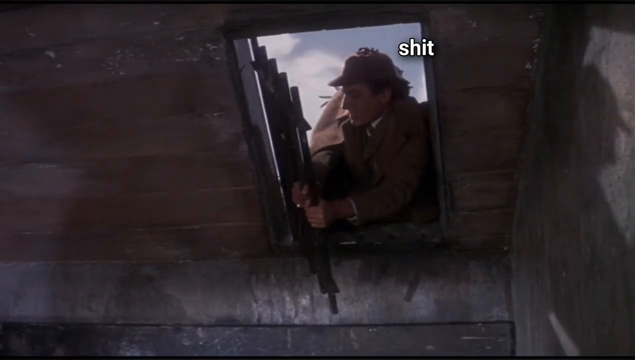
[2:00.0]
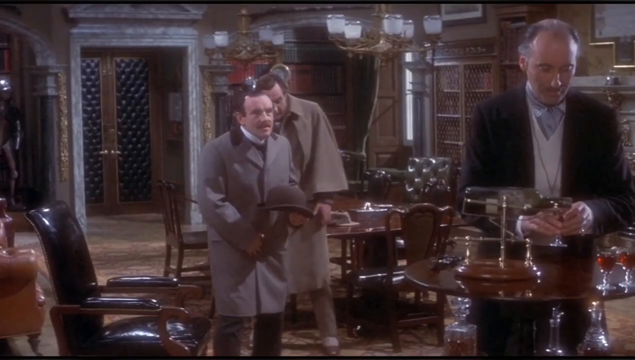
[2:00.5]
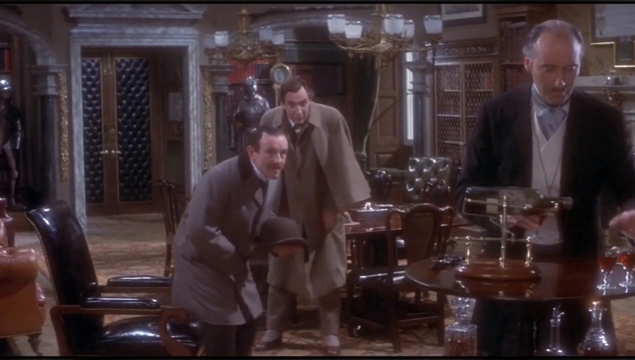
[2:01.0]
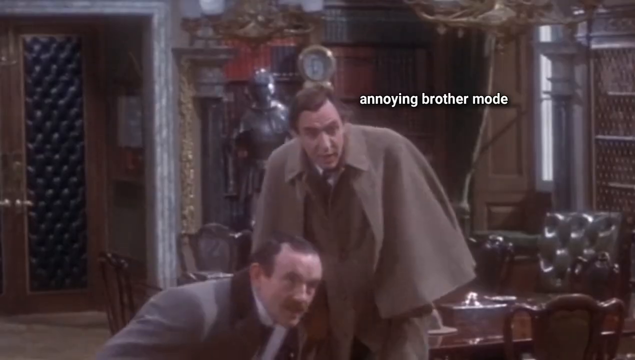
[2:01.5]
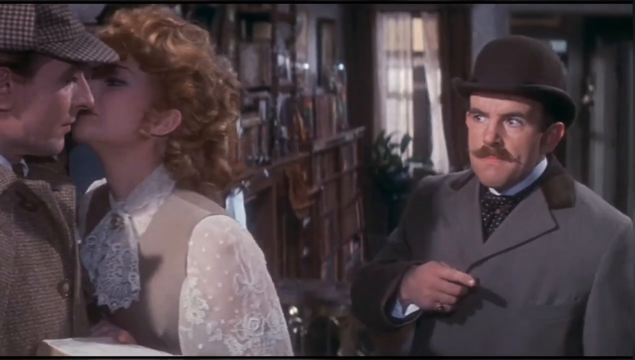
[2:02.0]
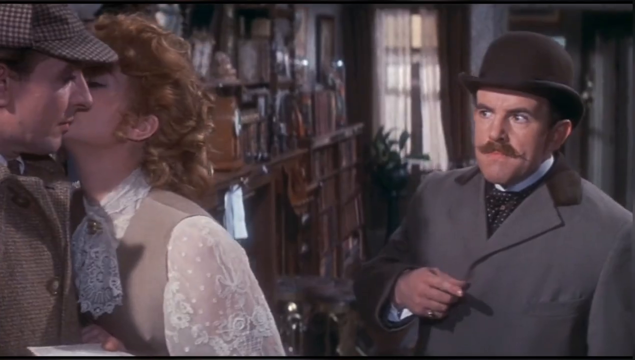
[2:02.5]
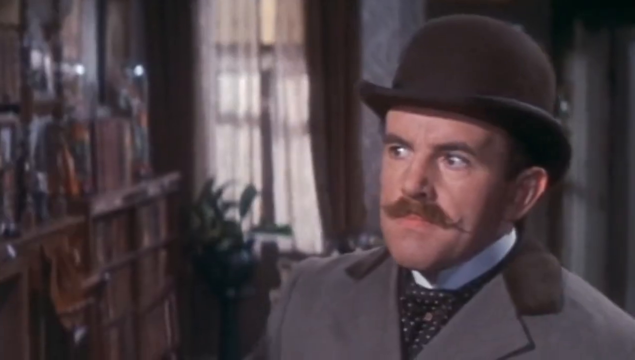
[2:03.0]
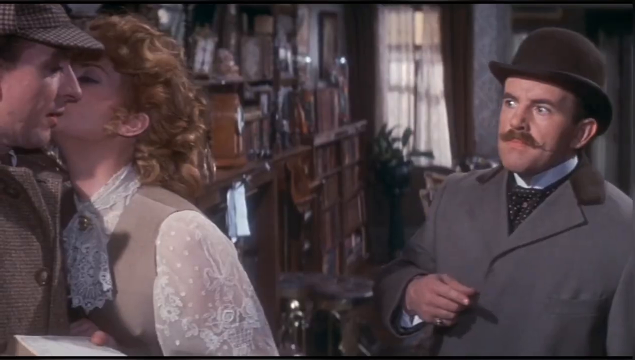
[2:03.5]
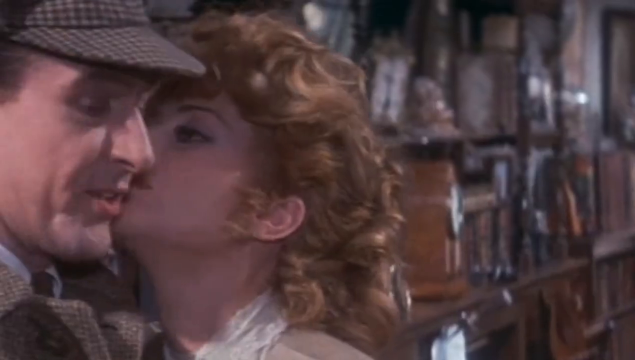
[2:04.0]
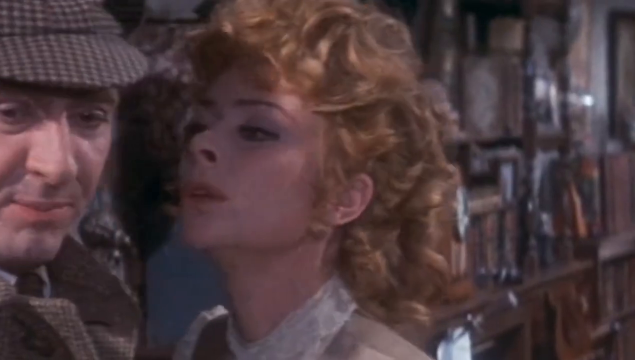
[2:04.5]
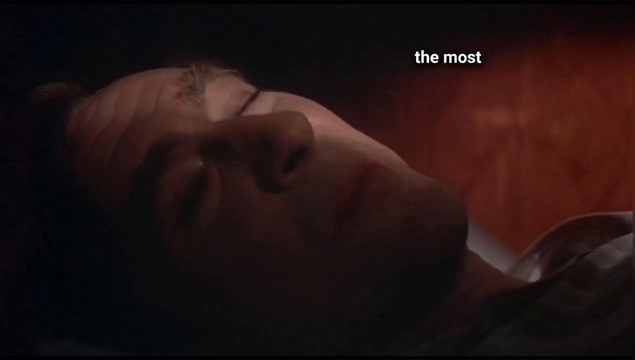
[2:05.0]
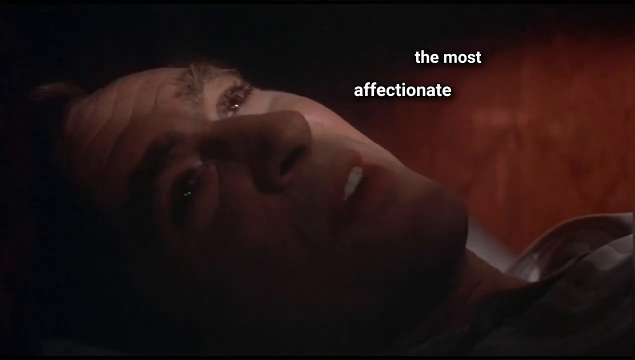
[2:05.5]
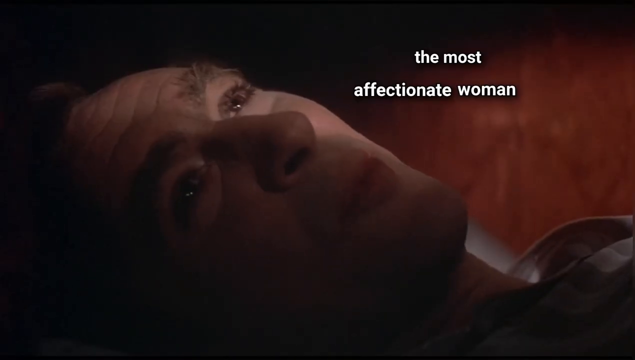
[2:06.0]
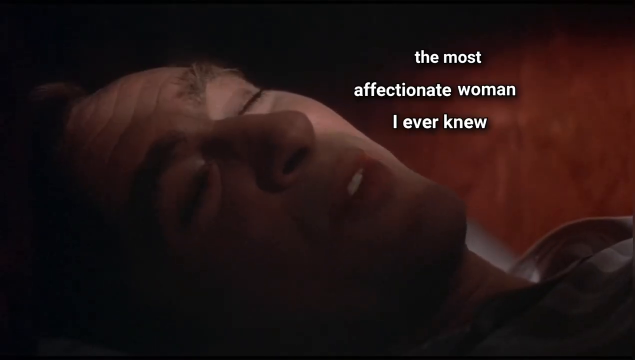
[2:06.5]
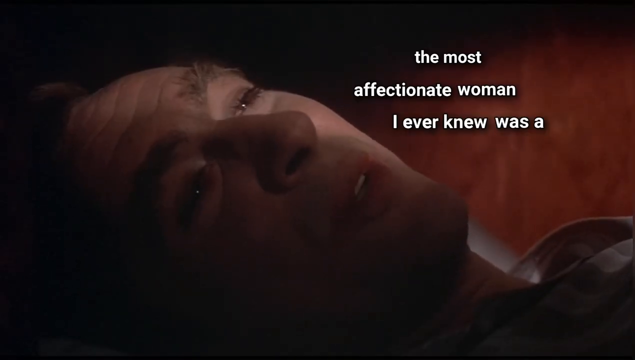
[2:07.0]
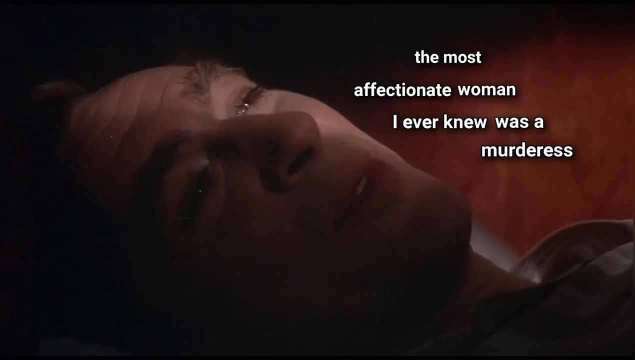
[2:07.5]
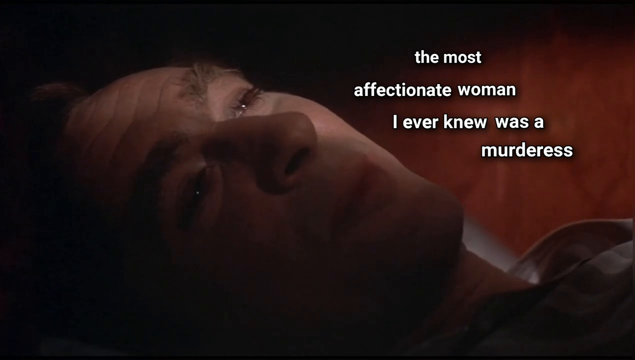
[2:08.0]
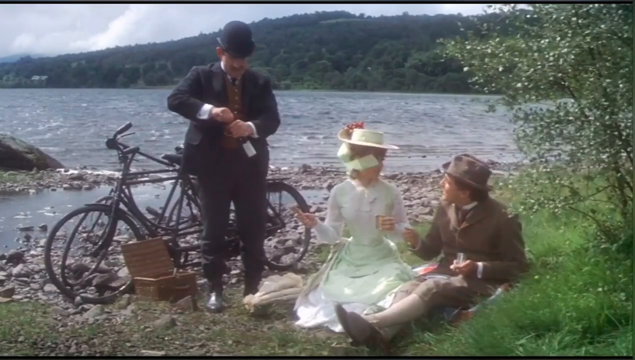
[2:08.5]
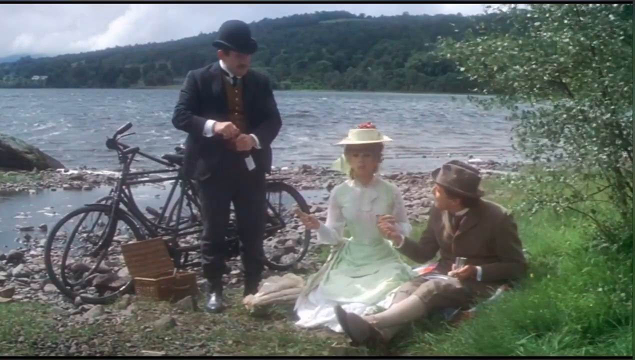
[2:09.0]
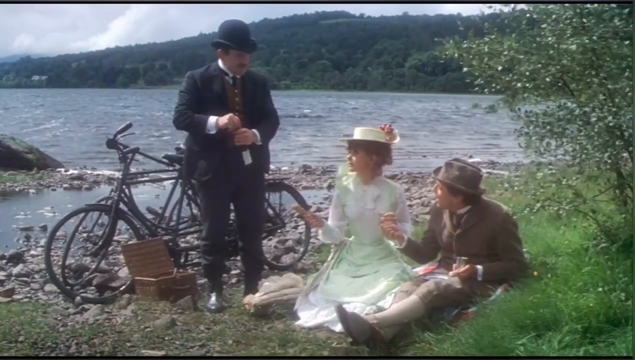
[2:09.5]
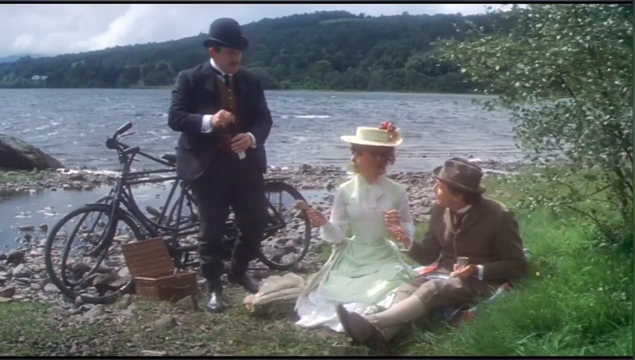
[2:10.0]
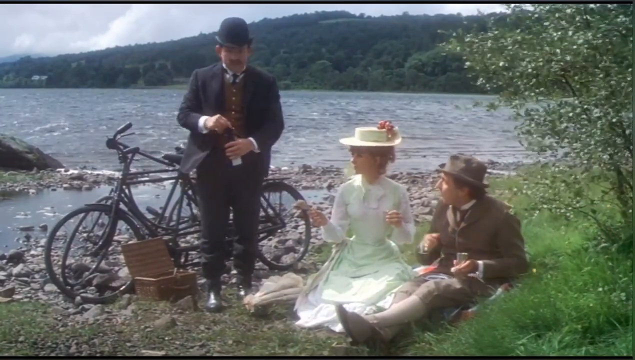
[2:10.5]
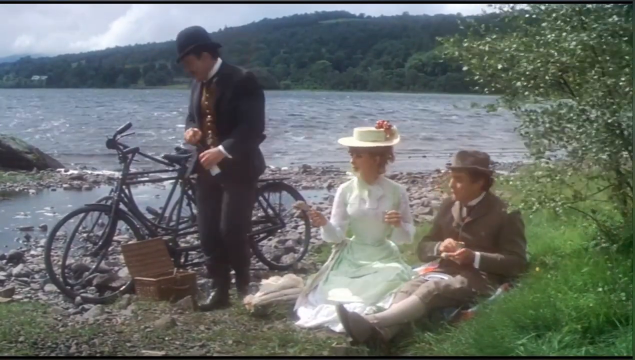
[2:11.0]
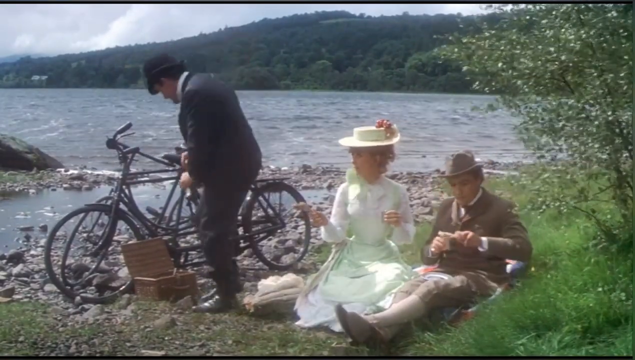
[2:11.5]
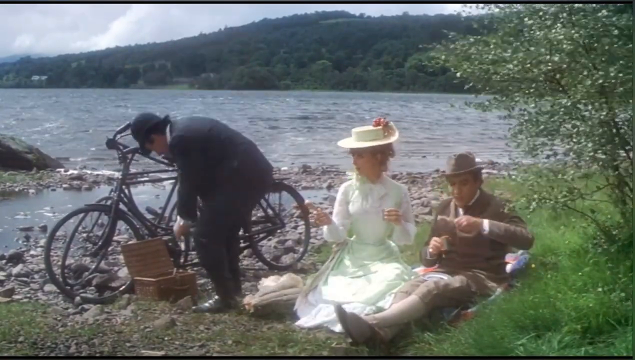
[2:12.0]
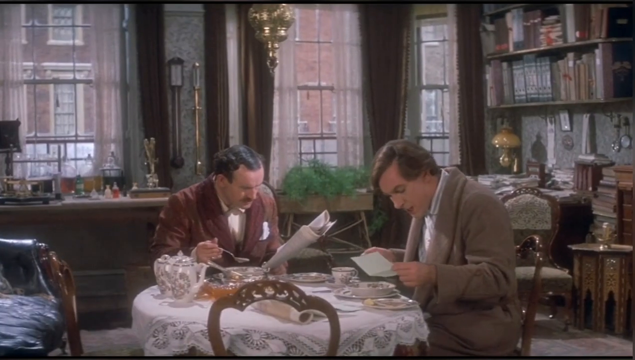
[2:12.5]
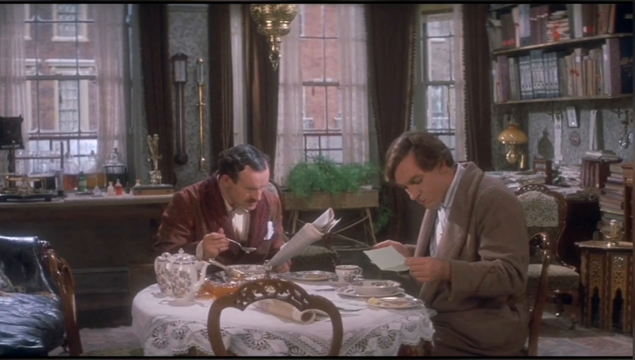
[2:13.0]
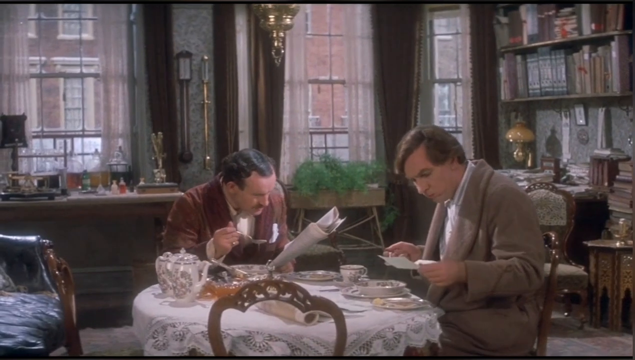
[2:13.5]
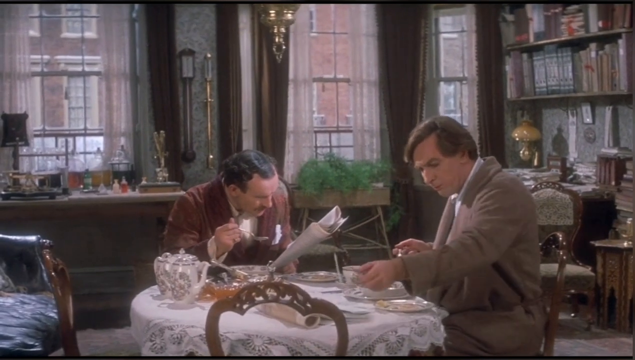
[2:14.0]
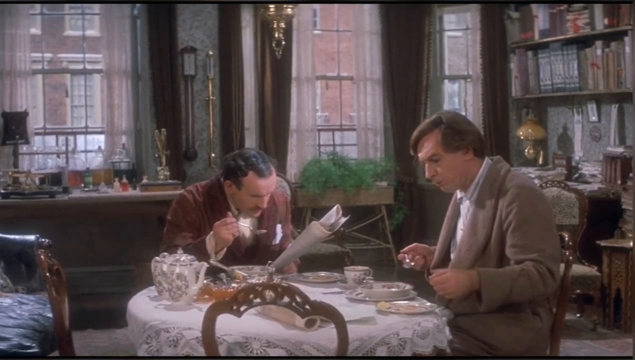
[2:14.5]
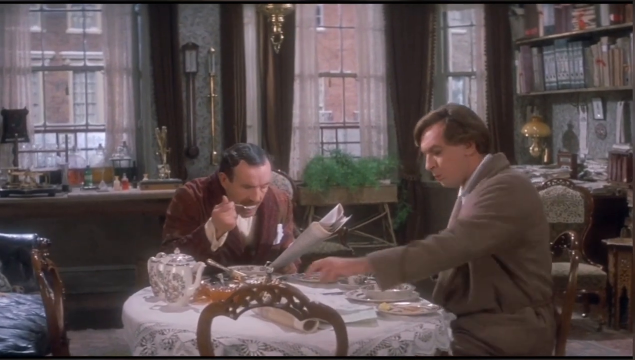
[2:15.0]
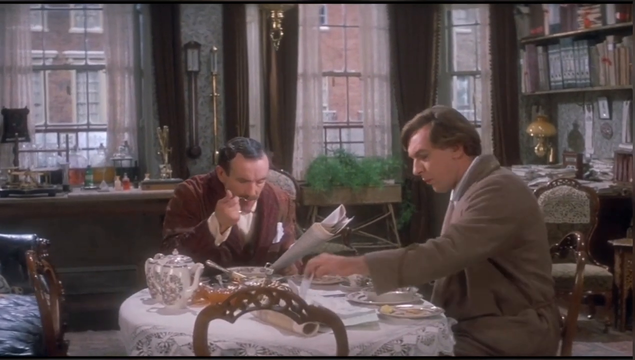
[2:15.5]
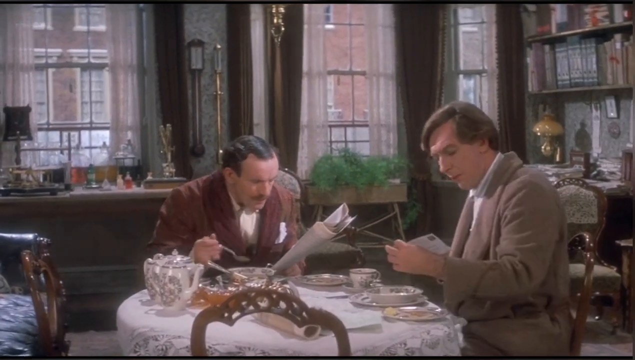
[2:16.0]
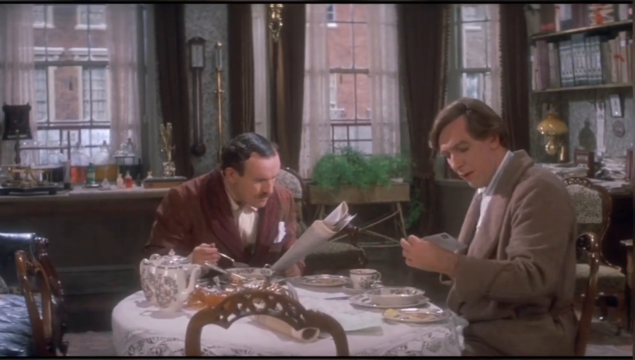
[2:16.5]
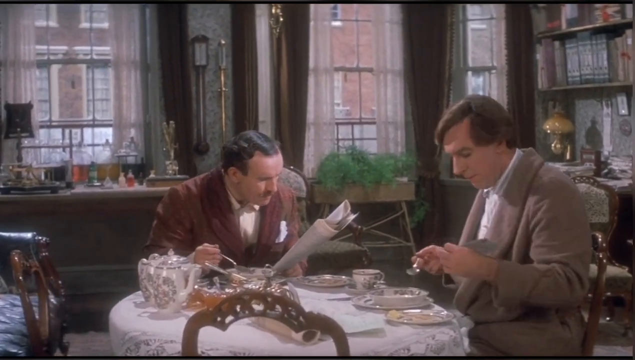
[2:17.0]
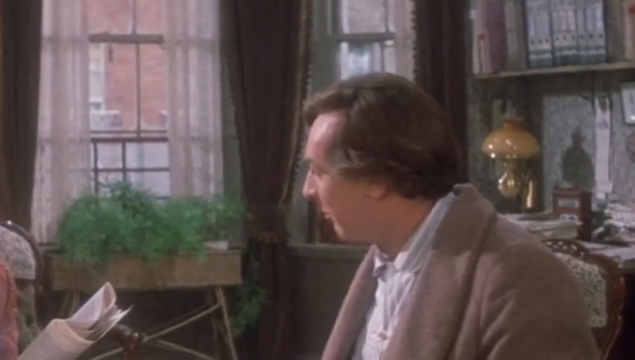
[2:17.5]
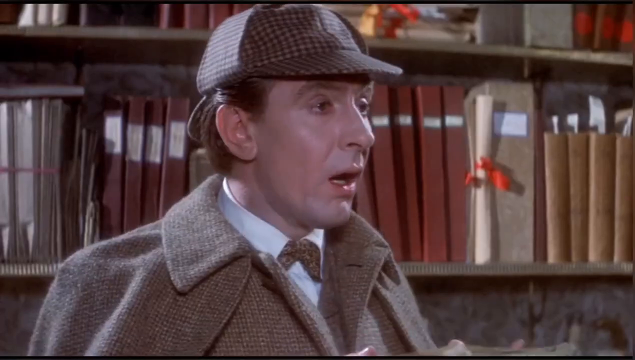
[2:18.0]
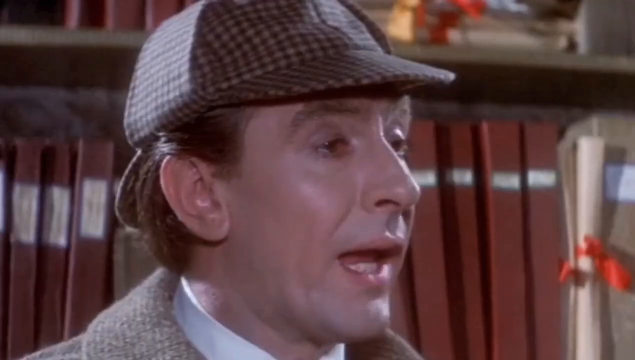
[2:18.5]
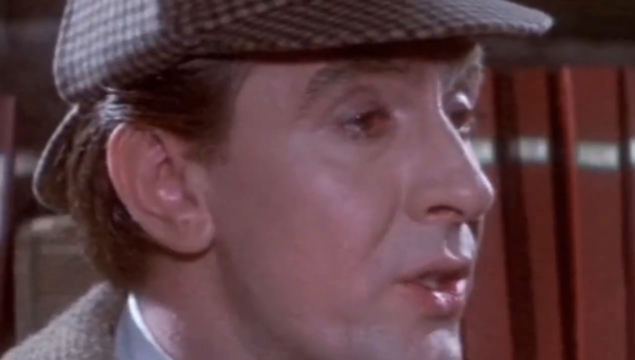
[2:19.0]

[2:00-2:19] The tall, brown-haired gentleman in his beige trench coat and brown detective hat tries to open a window covered with black wrought iron bars, and he gets it open. In another large room with lots of pictures and decorations on the wall, the gentleman in the old-style detective cap is kissed on the cheek by a red-haired woman in a white shirt and beige vest. Standing behind him is the other gentleman in his black derby hat, with a brown mustache and a grayish jacket. Outdoors, the gentleman in the beige trench coat and detective hat sits near a red-headed woman in a long light green and white dress. The gentleman in the black hat, black jacket and black pants stands in front of what look like two old-style bicycles. A brown basket that looks like a picnic basket is on the ground. The gentleman has a bottle in his hand and appears to be trying to open it.